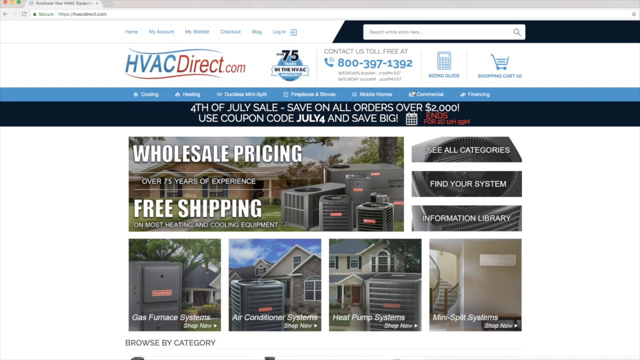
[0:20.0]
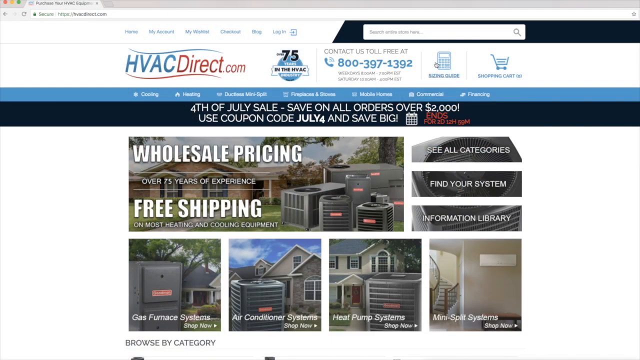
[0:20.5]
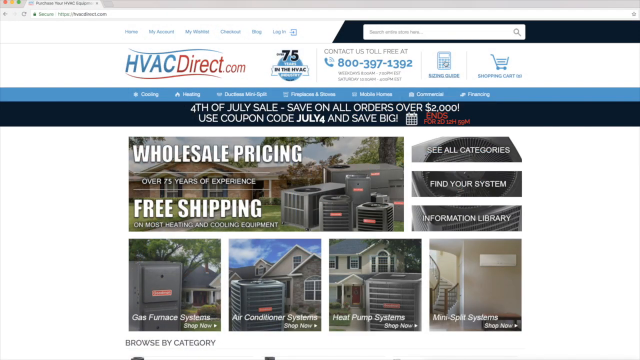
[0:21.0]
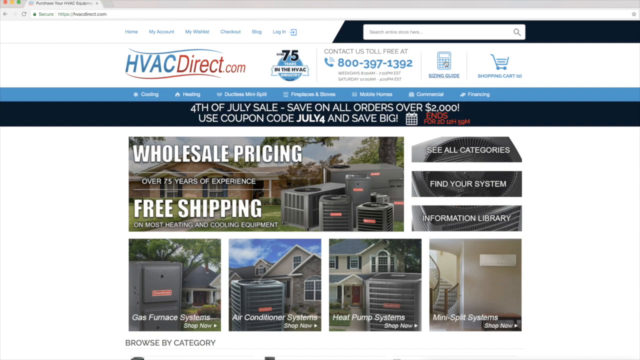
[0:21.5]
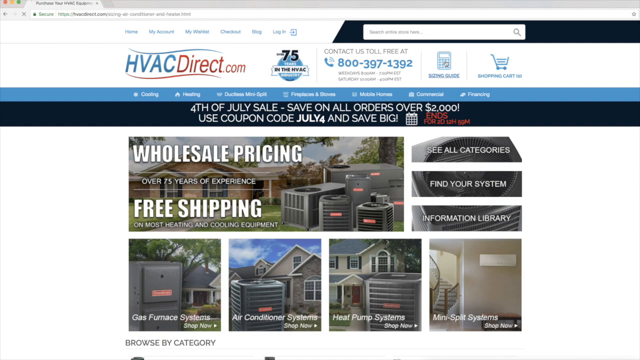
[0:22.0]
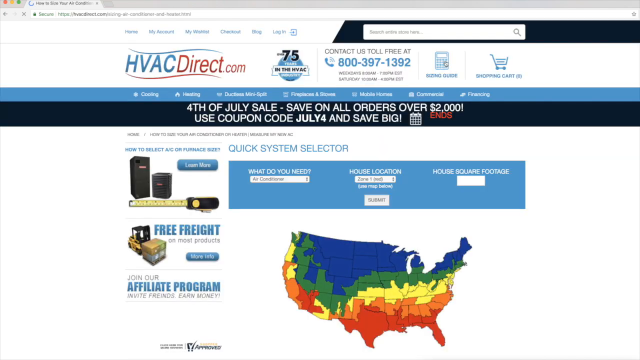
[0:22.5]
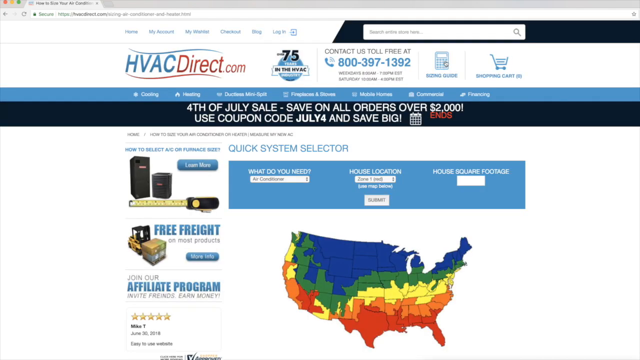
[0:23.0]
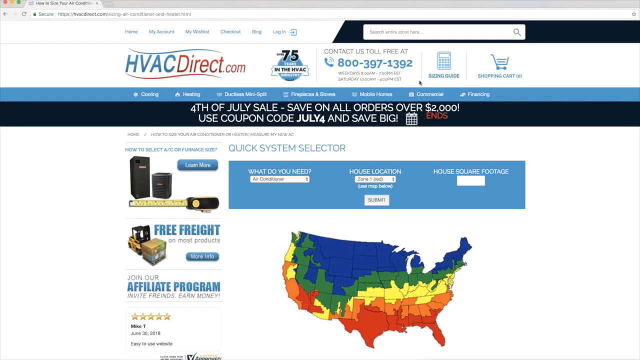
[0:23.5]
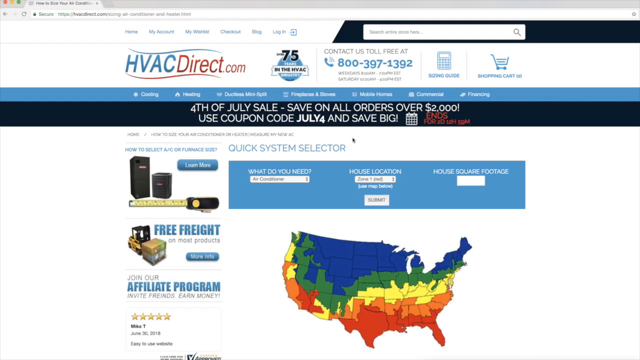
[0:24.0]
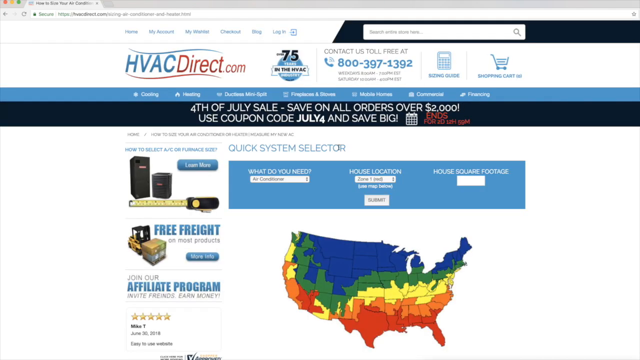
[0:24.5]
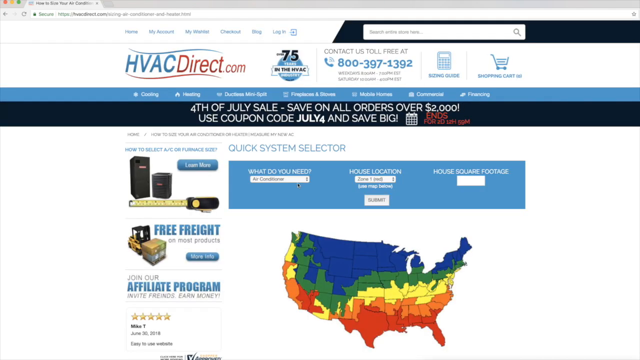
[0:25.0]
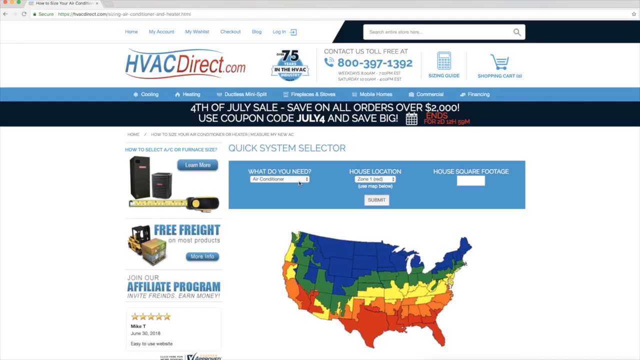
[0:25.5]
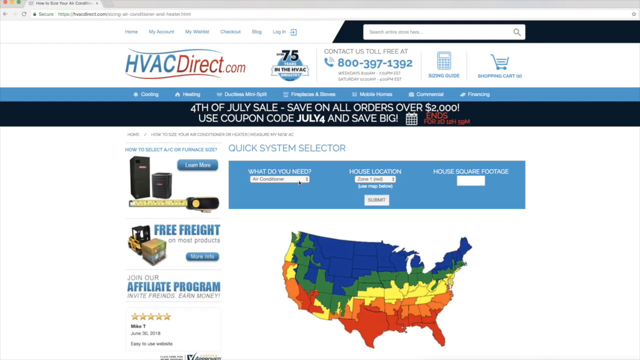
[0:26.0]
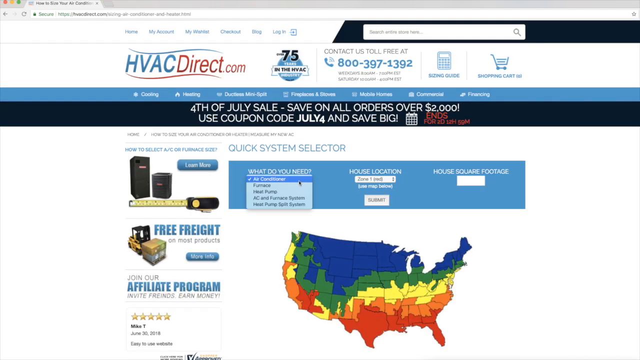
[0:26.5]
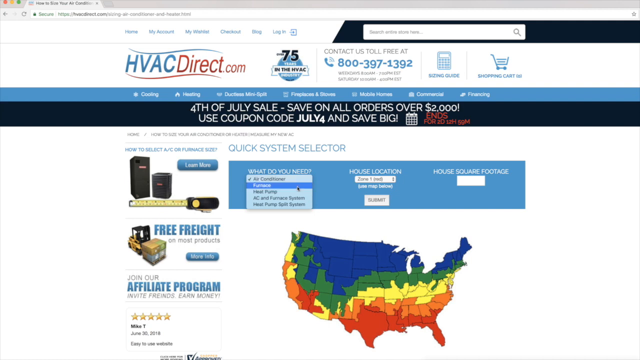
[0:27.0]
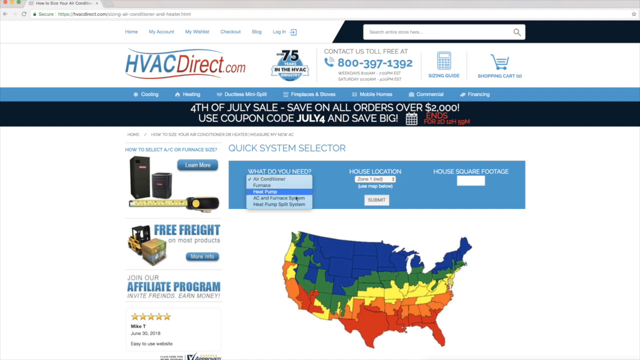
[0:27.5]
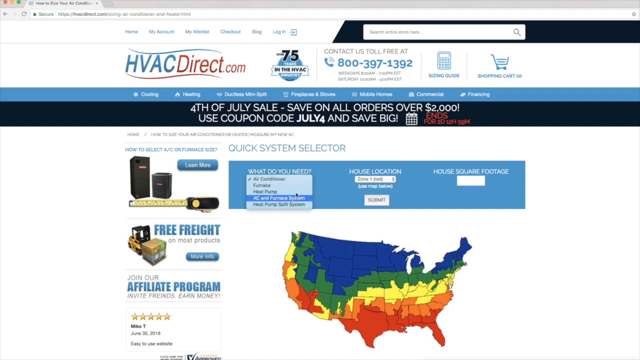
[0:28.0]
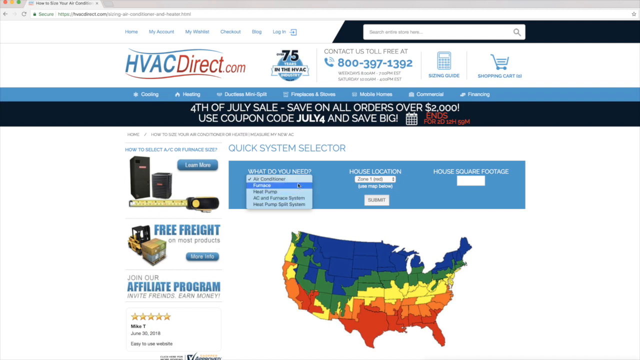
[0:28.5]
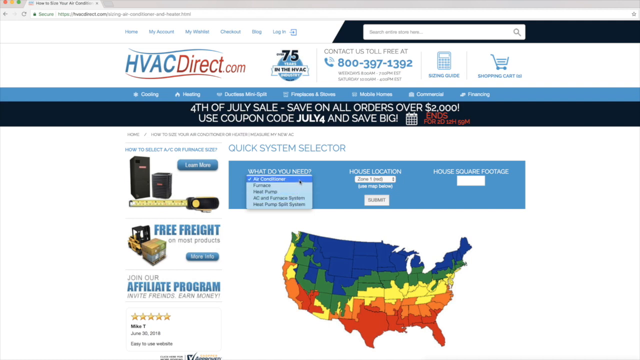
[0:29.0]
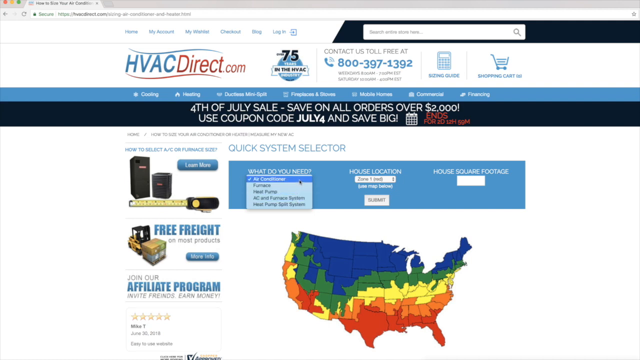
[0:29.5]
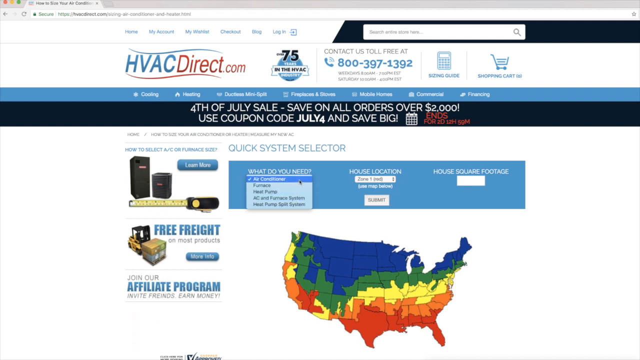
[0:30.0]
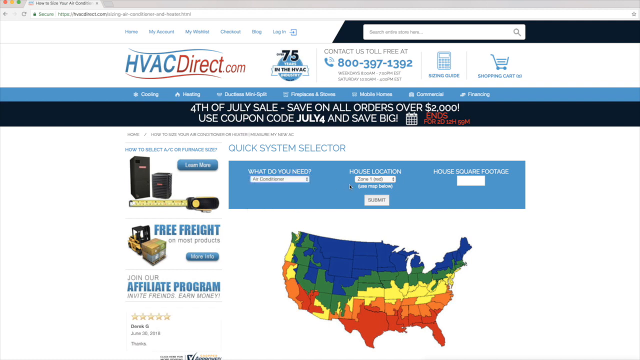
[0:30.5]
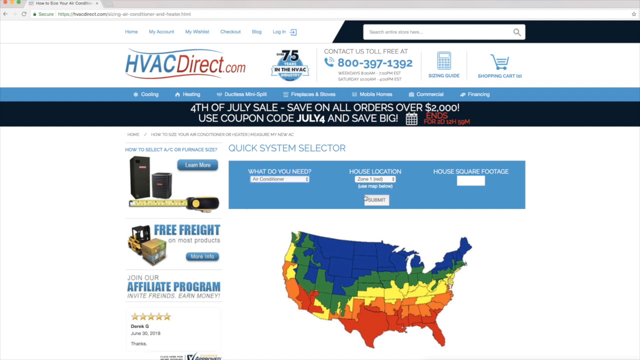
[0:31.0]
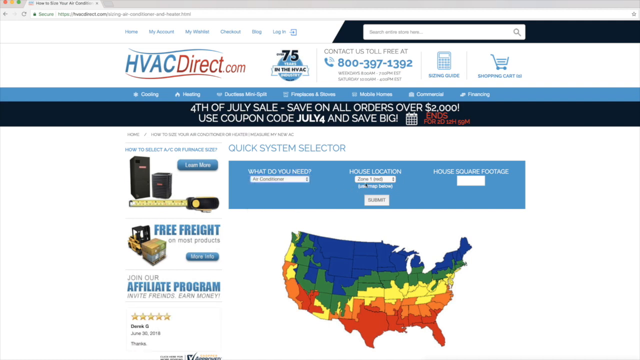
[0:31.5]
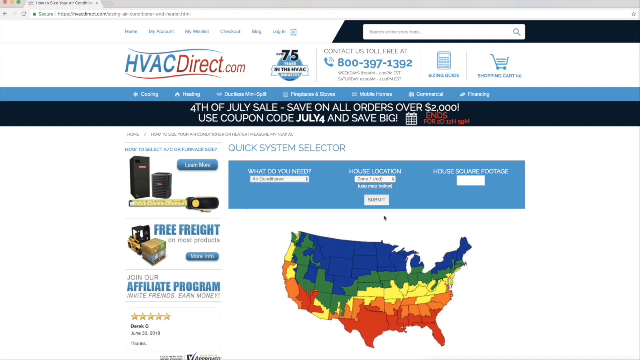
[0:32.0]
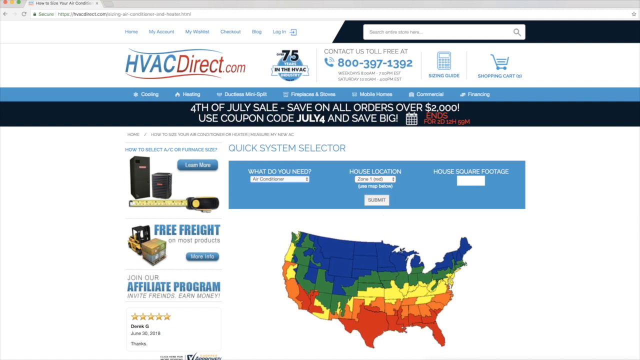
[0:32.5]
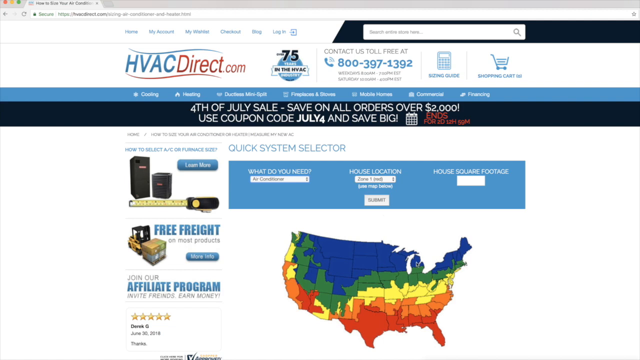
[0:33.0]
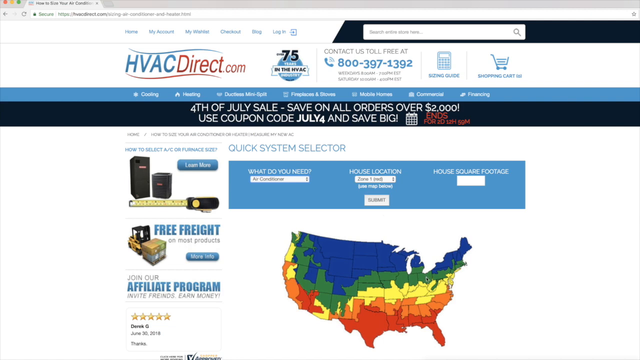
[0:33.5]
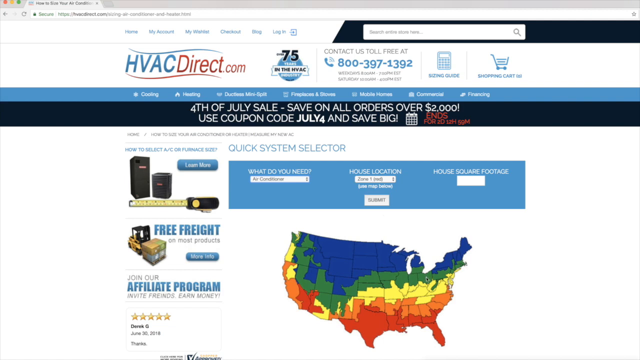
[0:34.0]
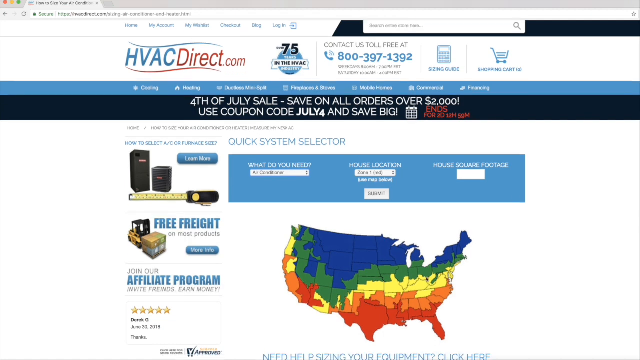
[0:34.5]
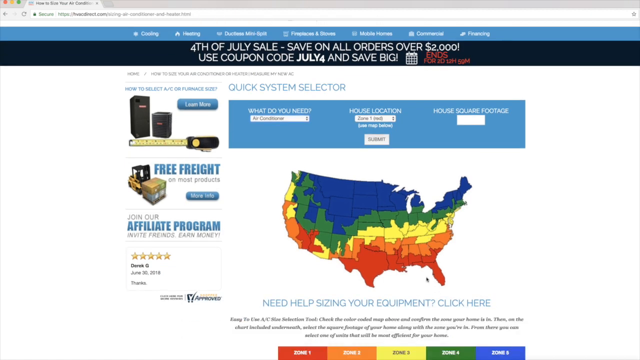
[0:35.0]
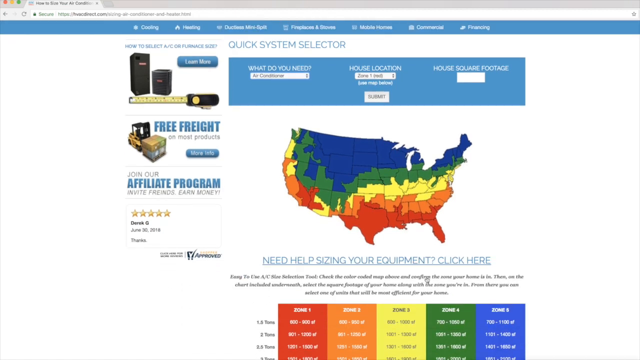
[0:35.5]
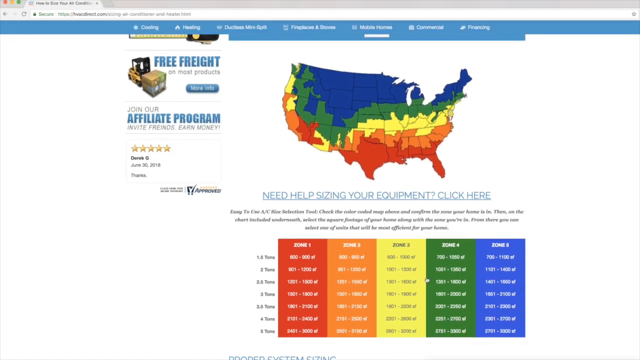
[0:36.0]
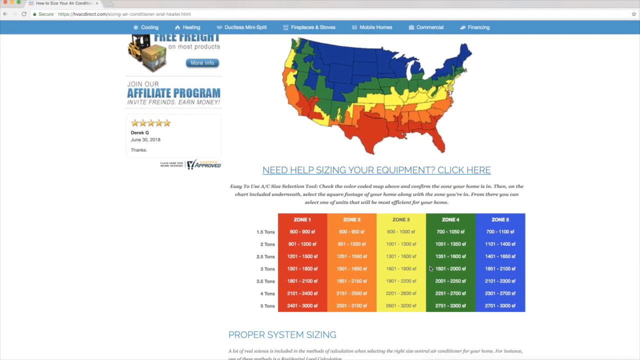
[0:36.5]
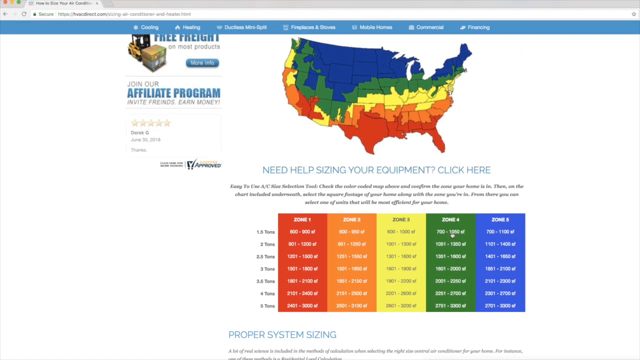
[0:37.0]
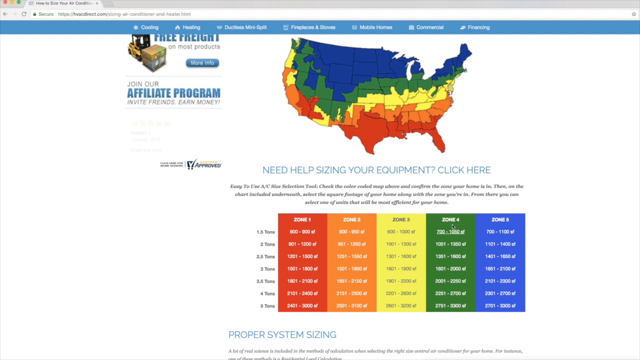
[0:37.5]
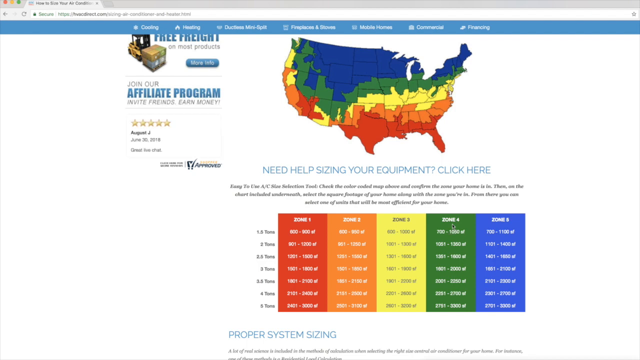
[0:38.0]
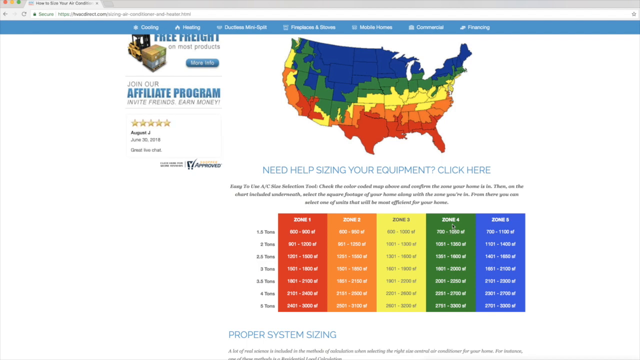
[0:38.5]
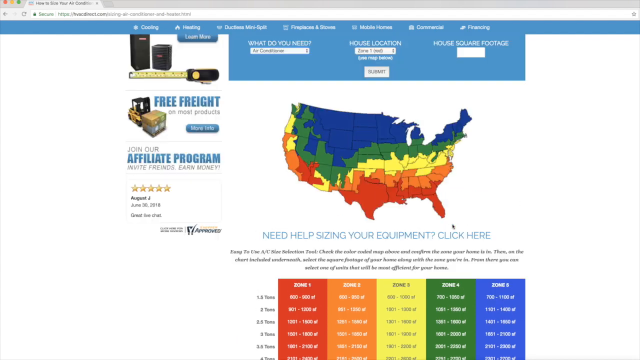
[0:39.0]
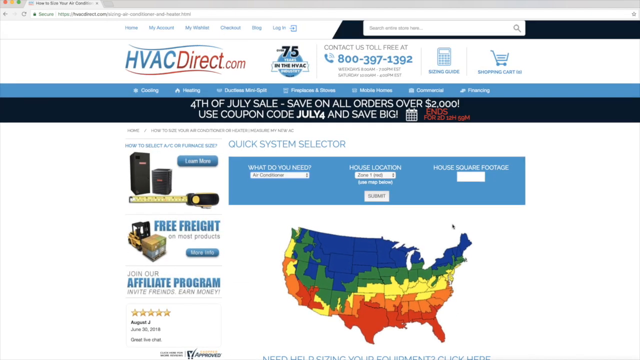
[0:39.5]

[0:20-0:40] The screen shows "O-SYS pricing" and "free shipping" for certain products. A 4th of July offer reads "save all orders over $2,000, use coupon code JULY4 and save big." A map shows coverage of many areas of the world. The page, apparently an online website, shows the options "see all categories", "find your system" and "information library".